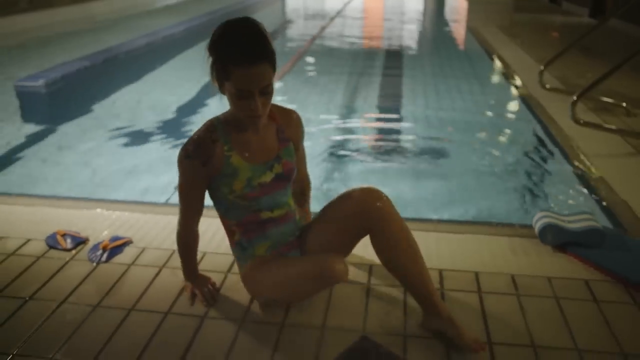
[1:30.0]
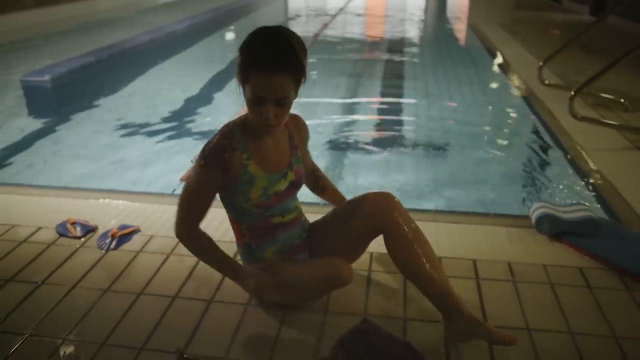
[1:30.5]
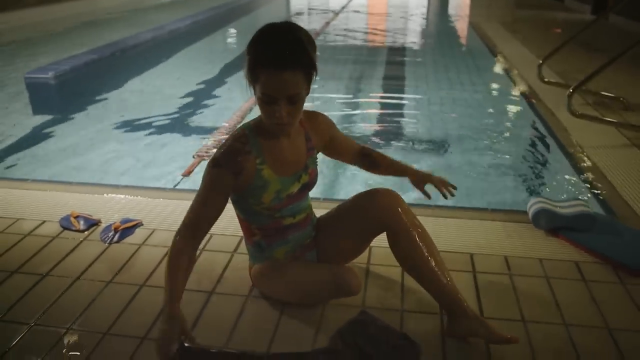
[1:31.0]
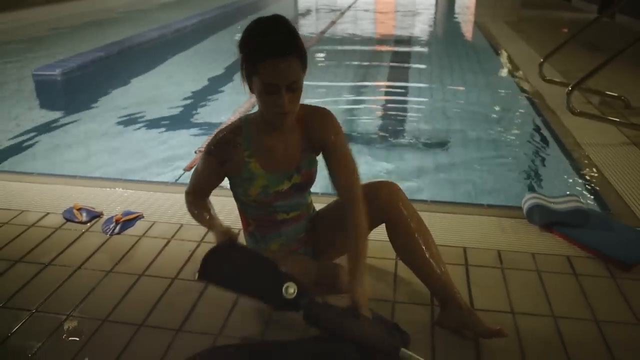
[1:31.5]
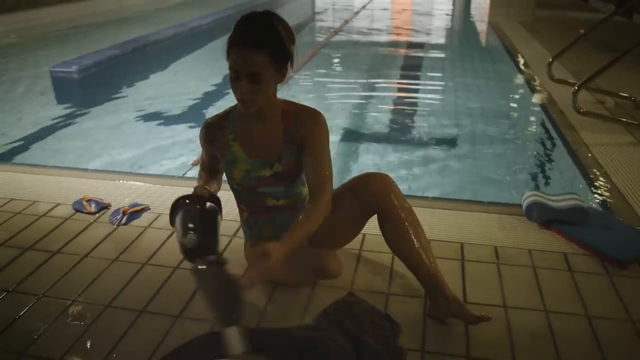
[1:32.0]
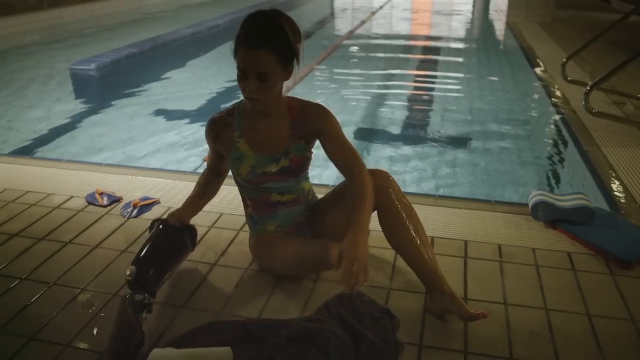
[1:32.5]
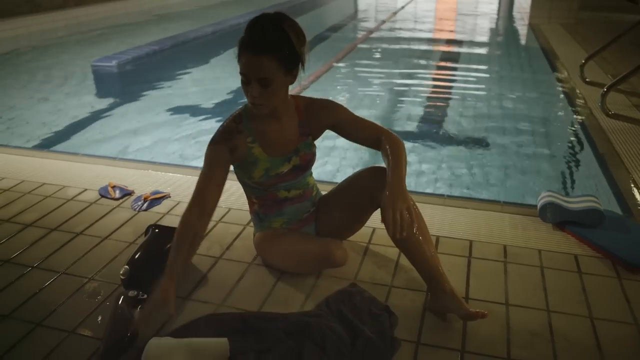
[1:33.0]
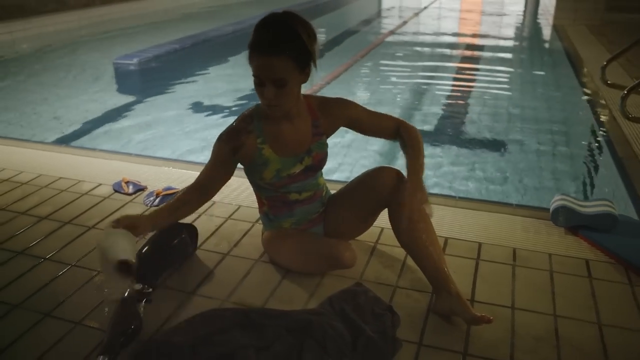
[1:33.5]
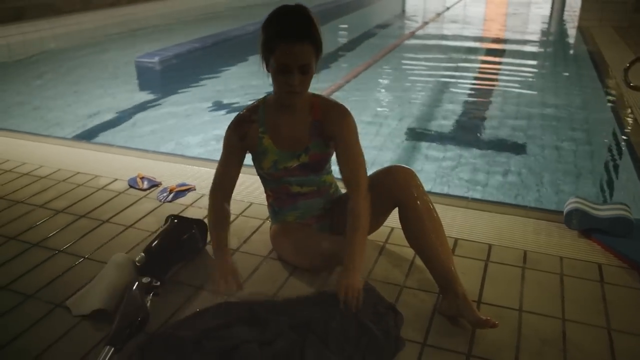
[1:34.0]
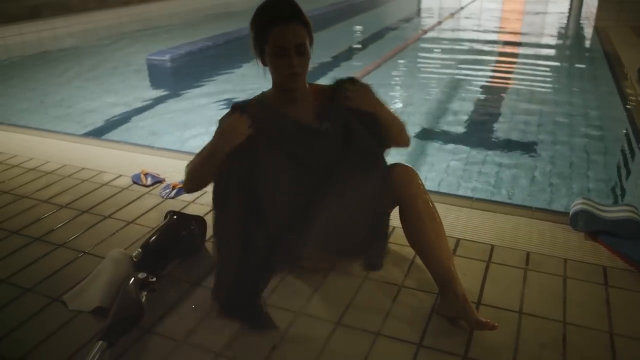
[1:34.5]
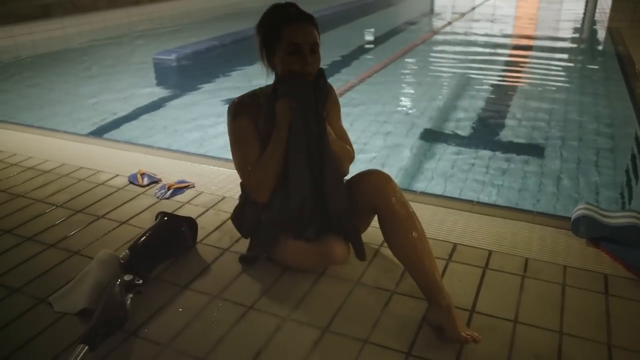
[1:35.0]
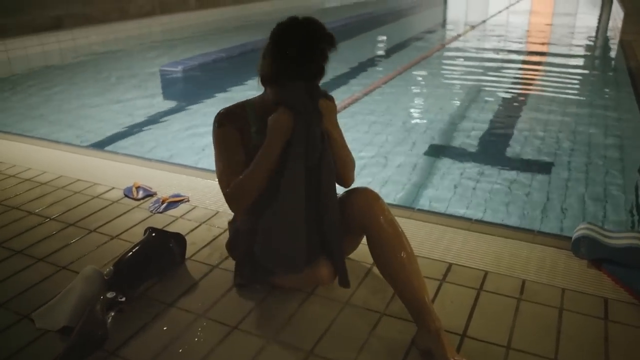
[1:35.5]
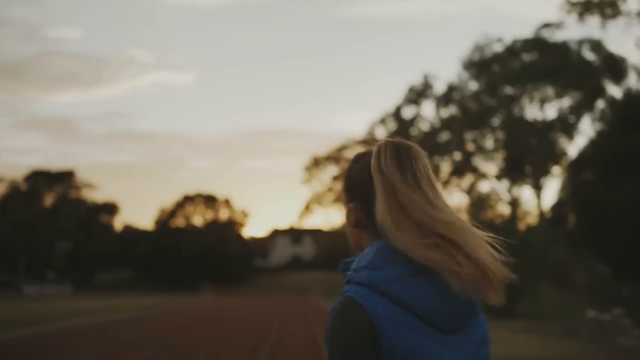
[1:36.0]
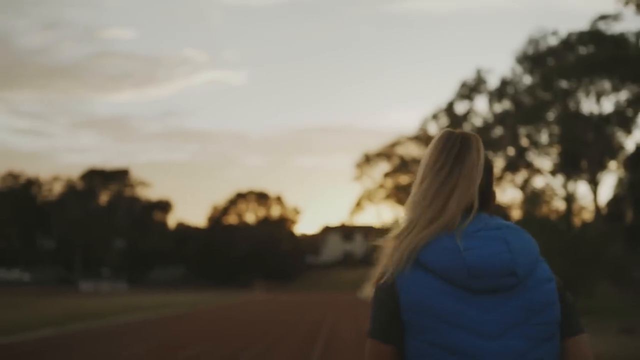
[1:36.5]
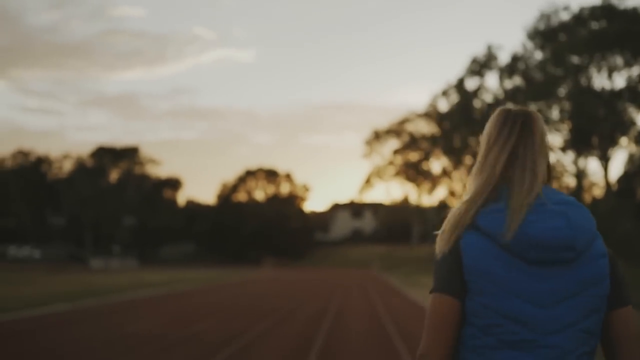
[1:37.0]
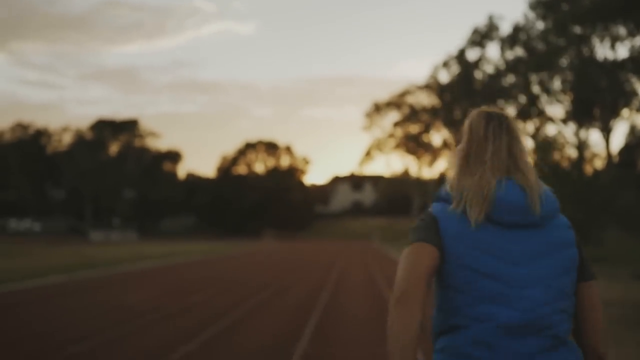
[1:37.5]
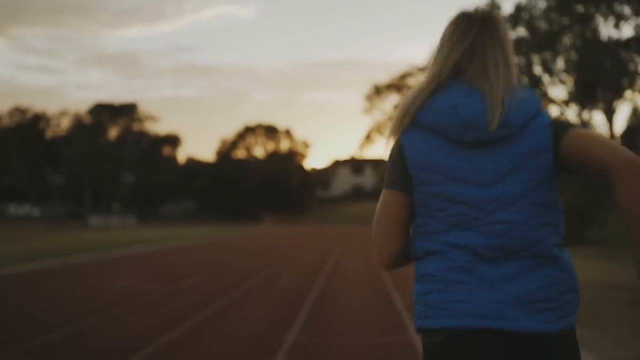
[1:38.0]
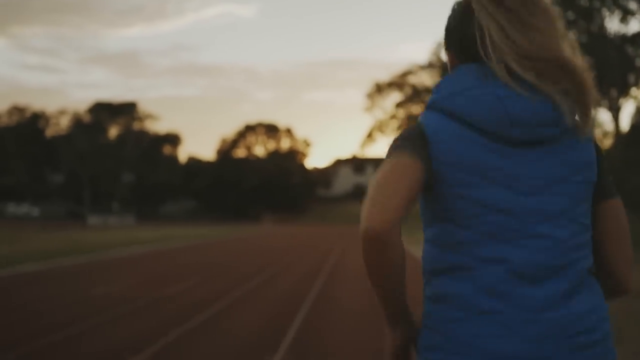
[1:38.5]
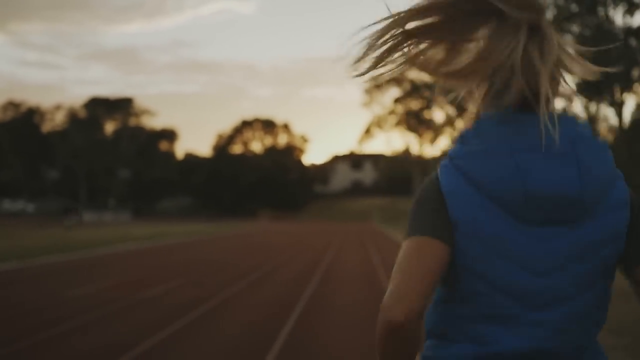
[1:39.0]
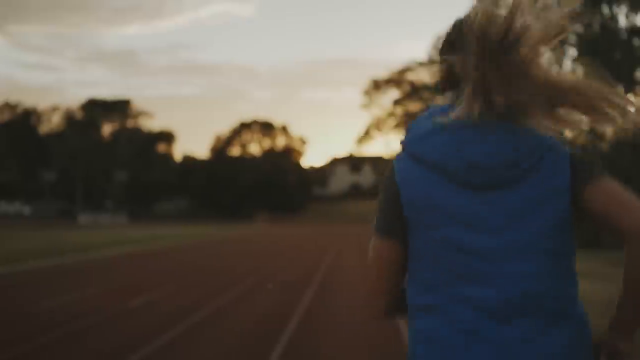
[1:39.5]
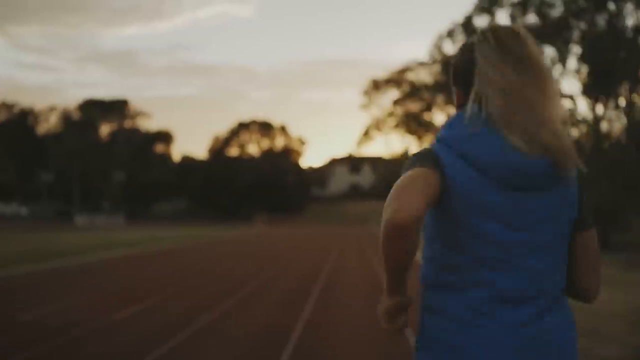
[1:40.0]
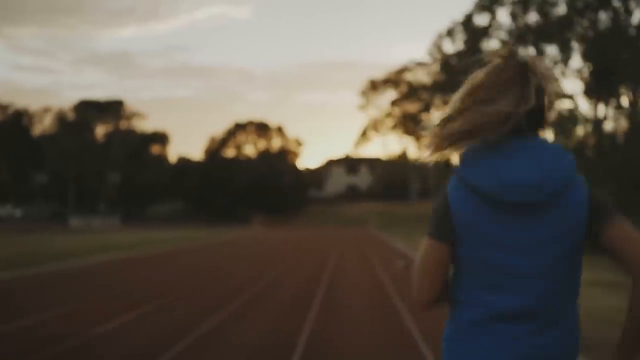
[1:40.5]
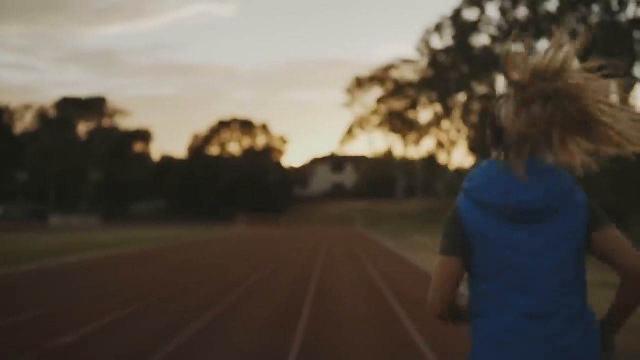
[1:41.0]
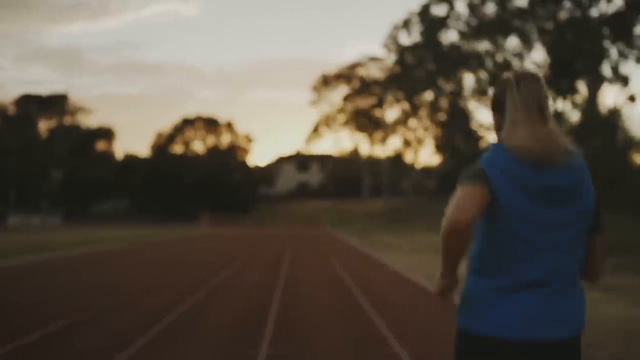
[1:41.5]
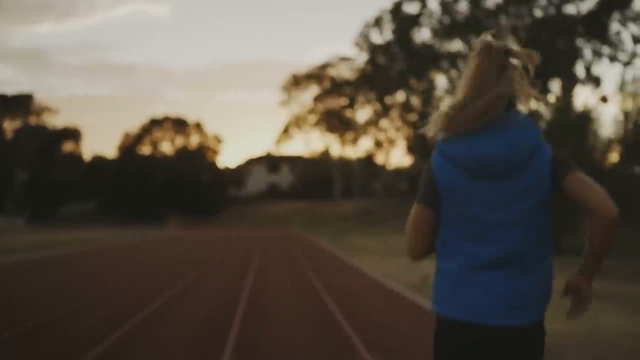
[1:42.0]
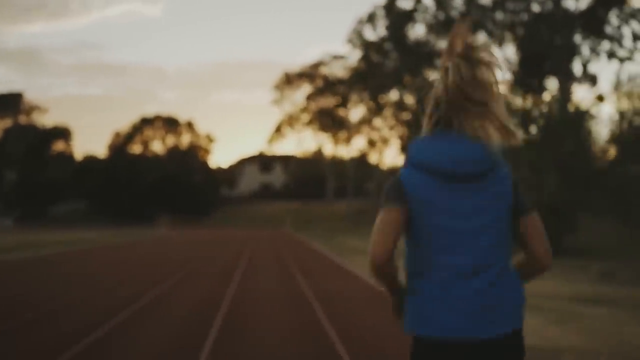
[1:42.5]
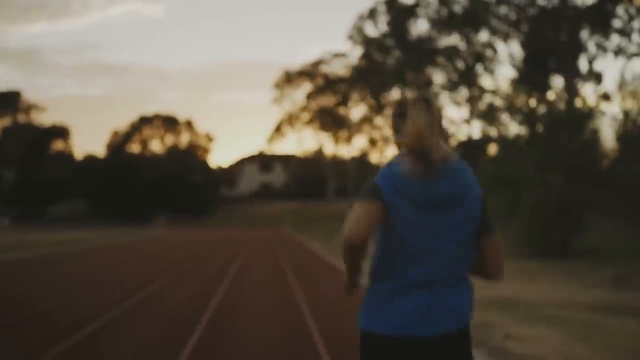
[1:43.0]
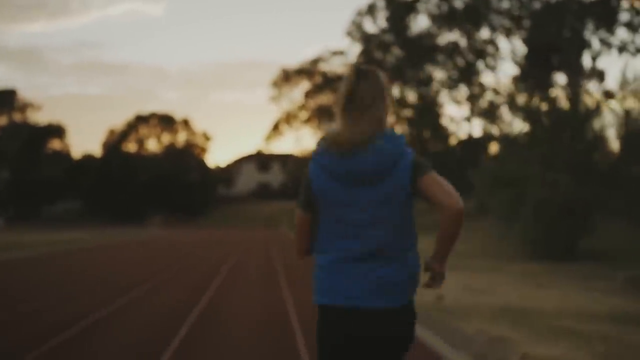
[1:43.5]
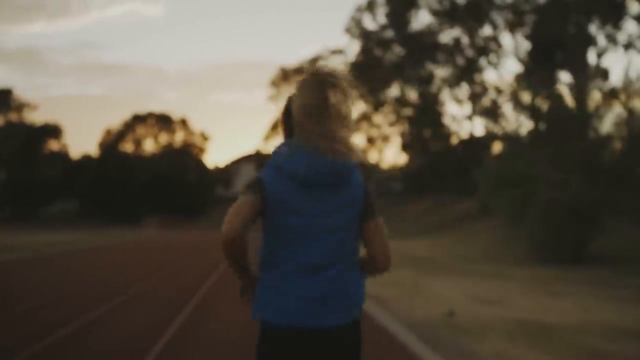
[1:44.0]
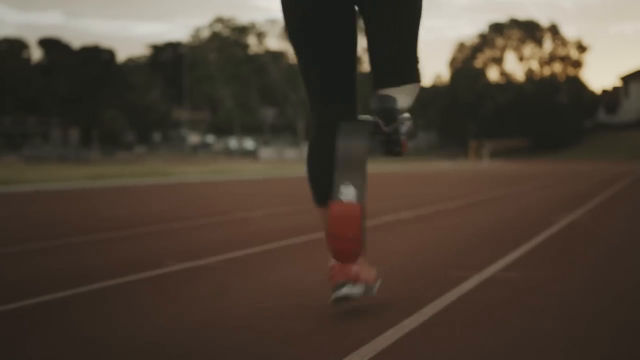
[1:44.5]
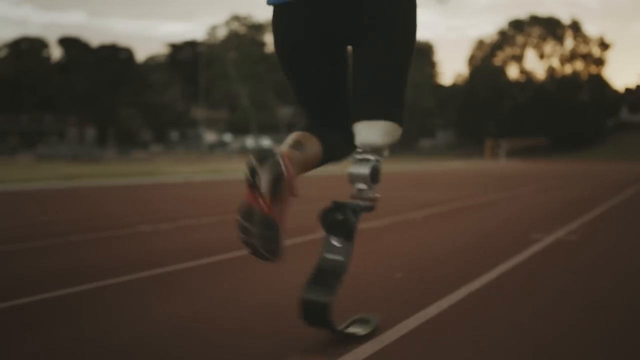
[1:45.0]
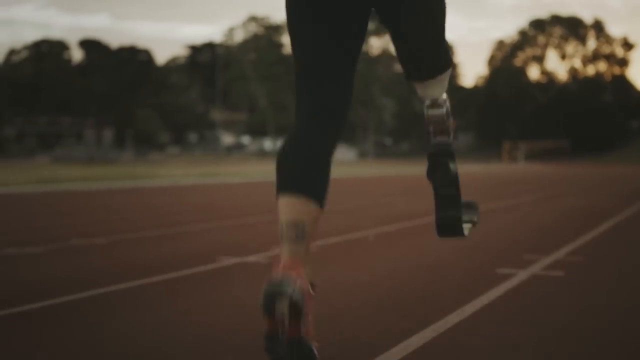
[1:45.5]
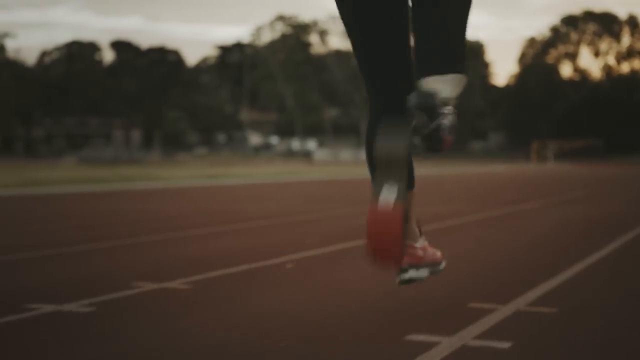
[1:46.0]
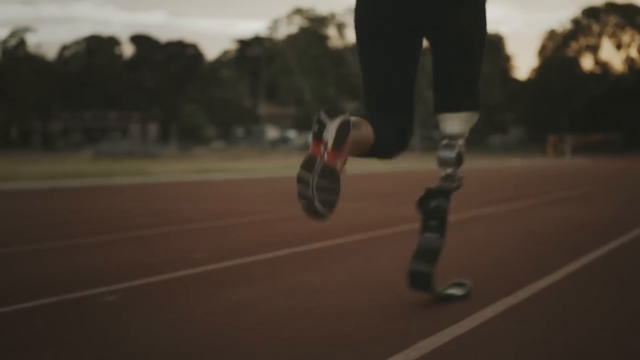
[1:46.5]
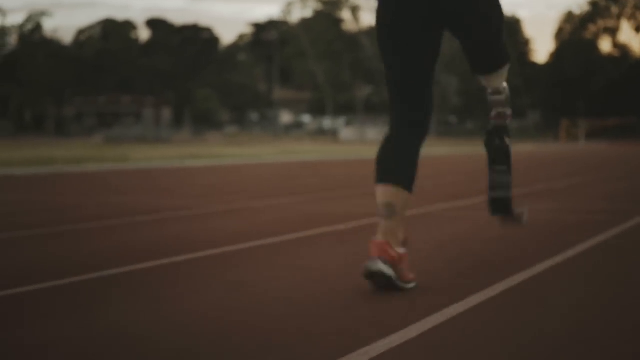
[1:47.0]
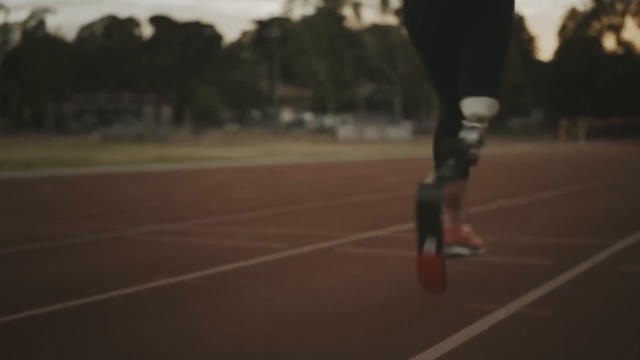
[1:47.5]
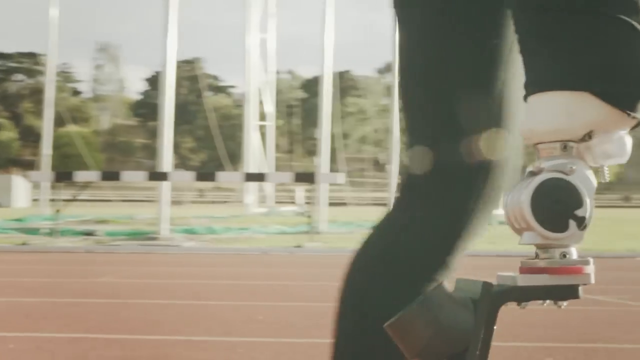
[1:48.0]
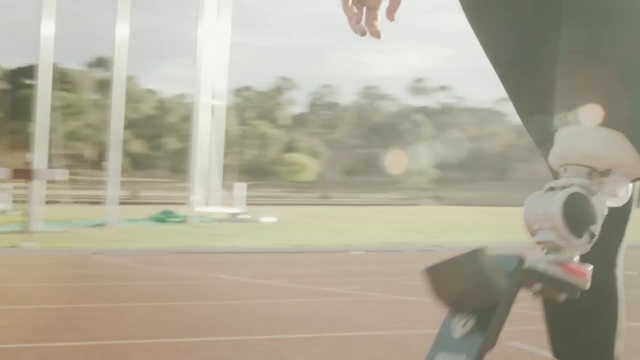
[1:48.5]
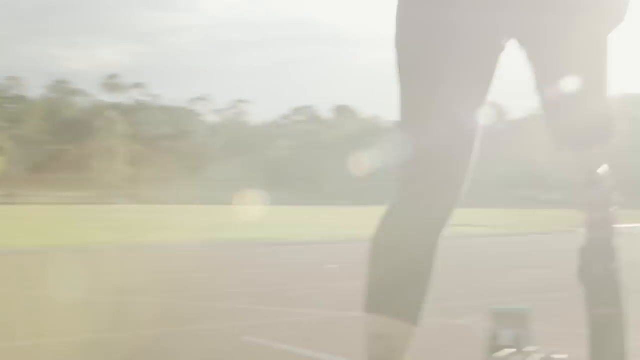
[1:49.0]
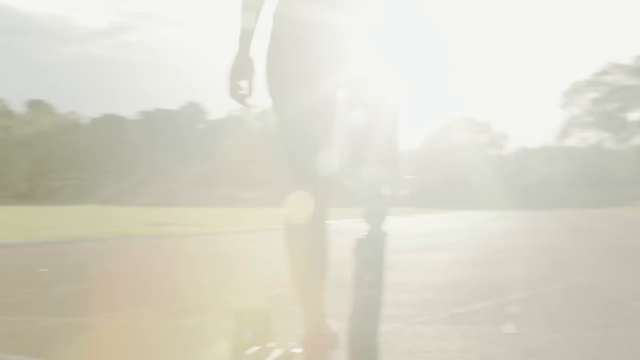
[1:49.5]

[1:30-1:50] A young Paralympic athlete climbs out of an indoor swimming pool and sits on the edge. She wears a multicolored one-piece bathing suit, and she is missing her right leg below the knee. She picks up a prosthetic leg and a towel and dries herself off with the towel. The video switches to her running on an empty track, filmed from behind. She wears a black short-sleeved shirt with a blue windbreaker, and her blonde hair is pulled into a ponytail. A close-up of her legs shows she is wearing a prosthetic leg on the right side as she jogs down the field, followed by a brief view of her walking on her prosthetic leg down the field.